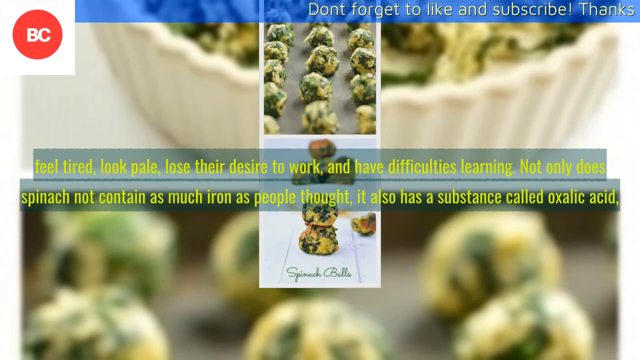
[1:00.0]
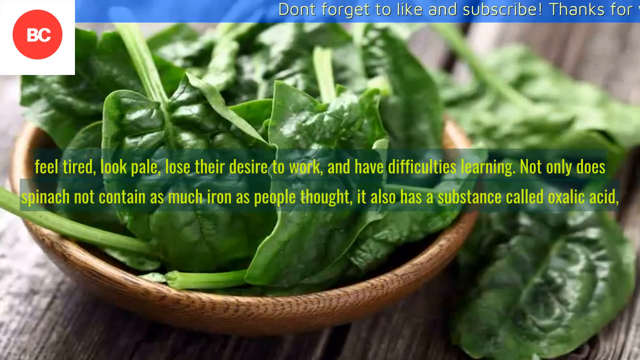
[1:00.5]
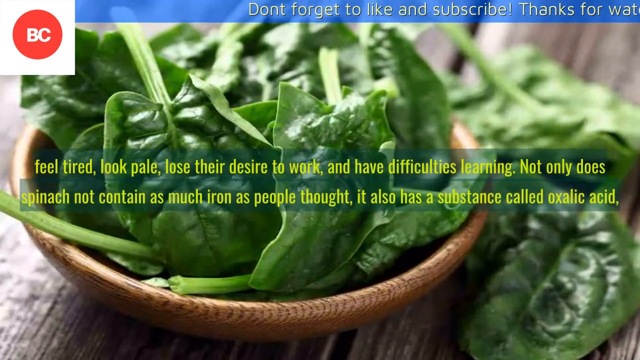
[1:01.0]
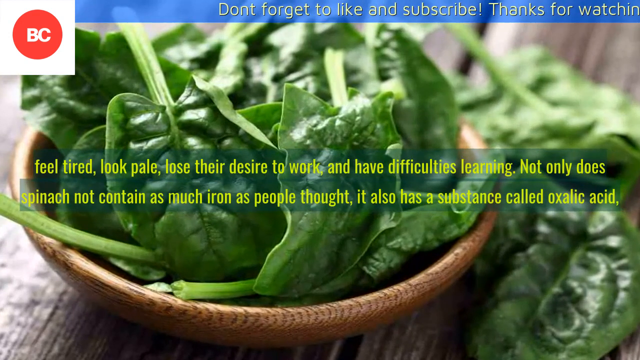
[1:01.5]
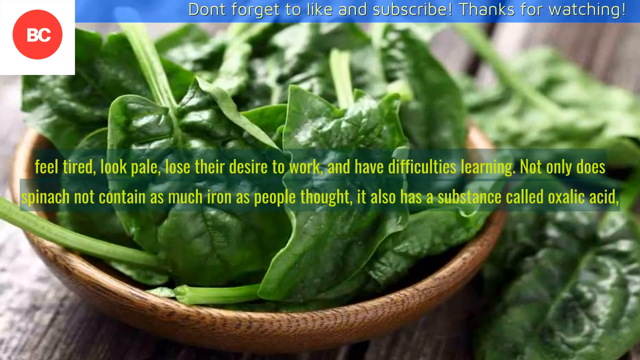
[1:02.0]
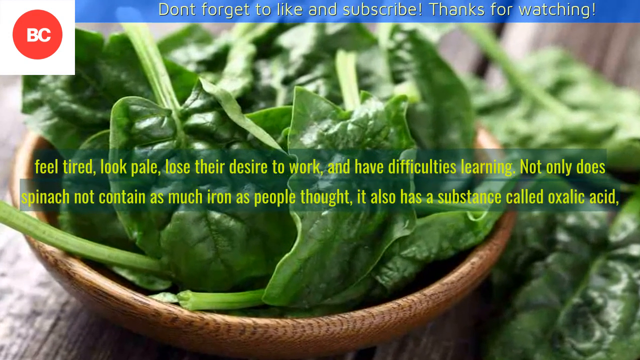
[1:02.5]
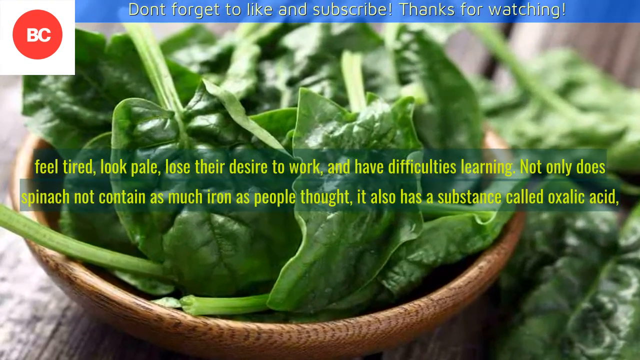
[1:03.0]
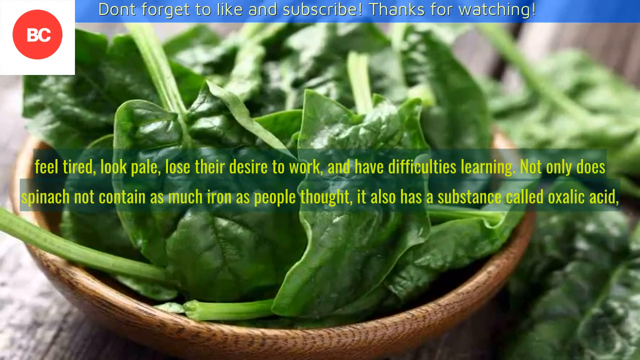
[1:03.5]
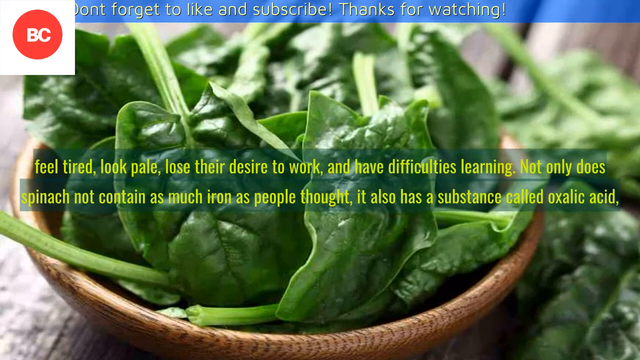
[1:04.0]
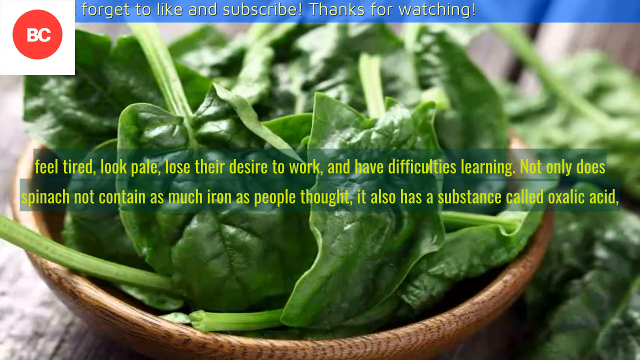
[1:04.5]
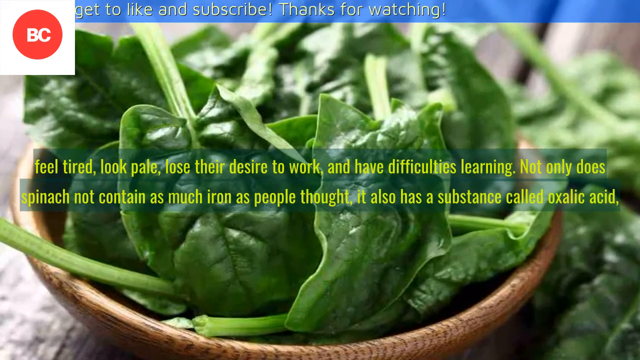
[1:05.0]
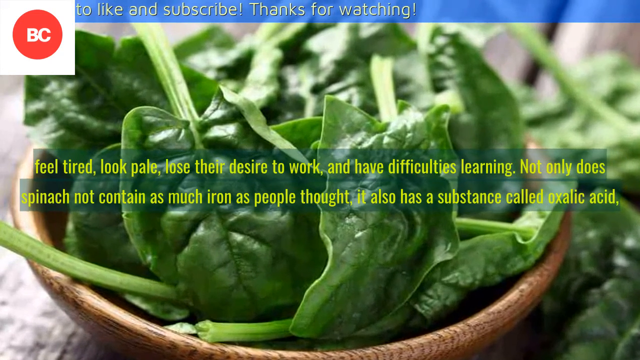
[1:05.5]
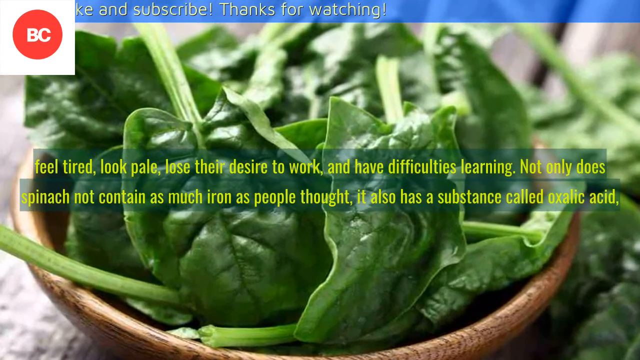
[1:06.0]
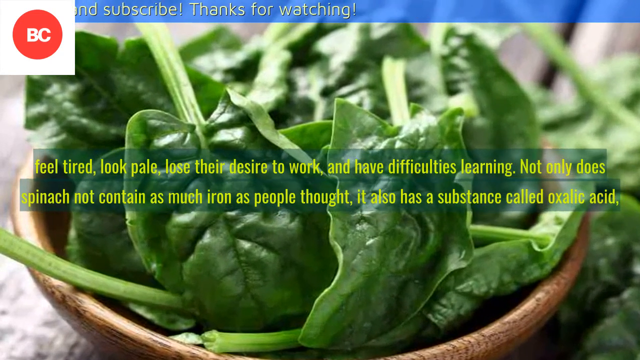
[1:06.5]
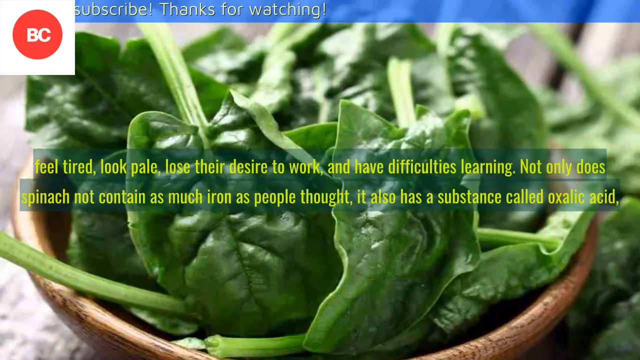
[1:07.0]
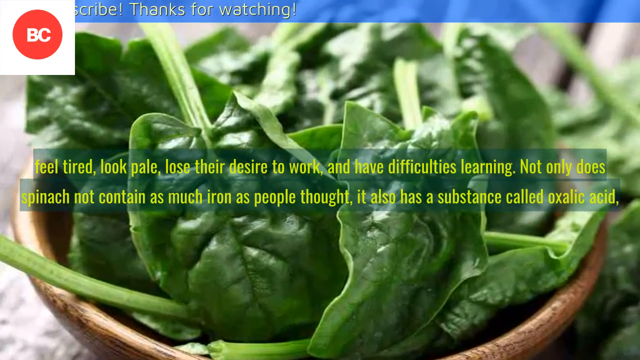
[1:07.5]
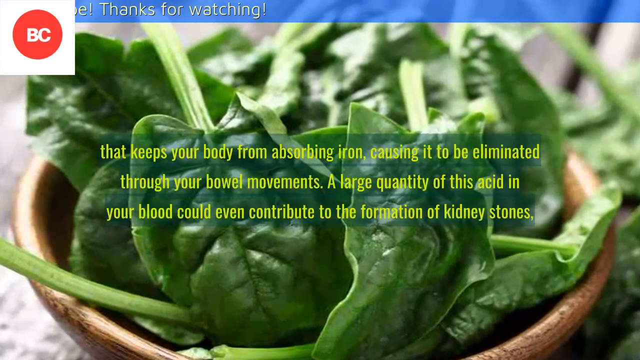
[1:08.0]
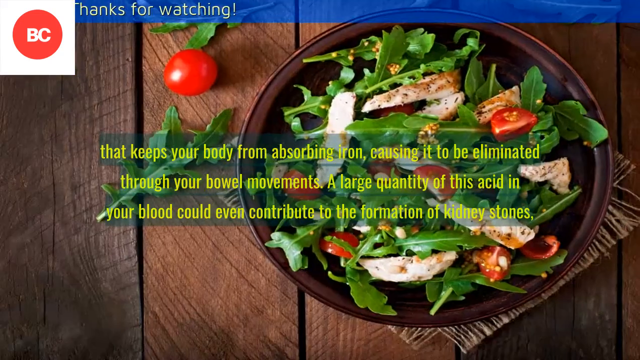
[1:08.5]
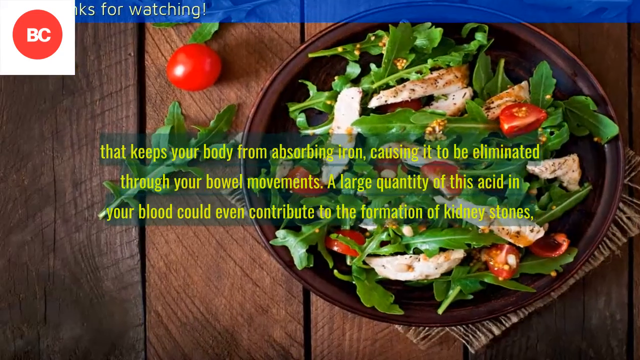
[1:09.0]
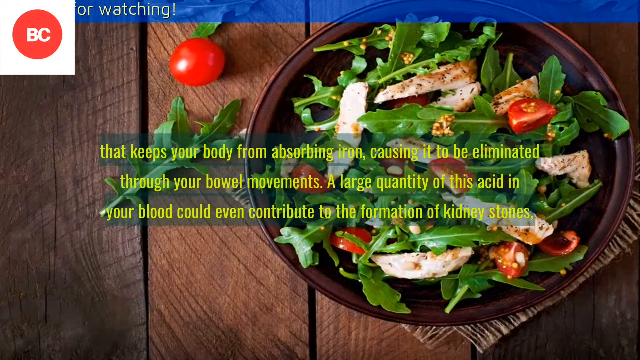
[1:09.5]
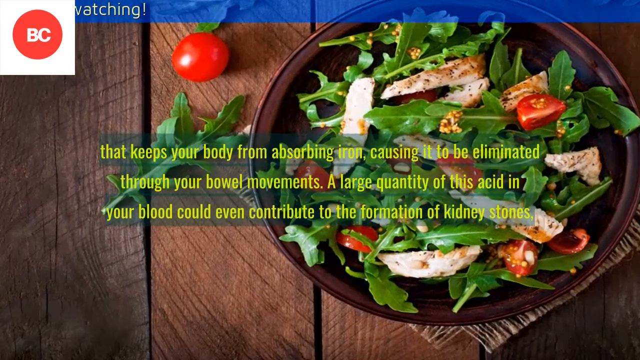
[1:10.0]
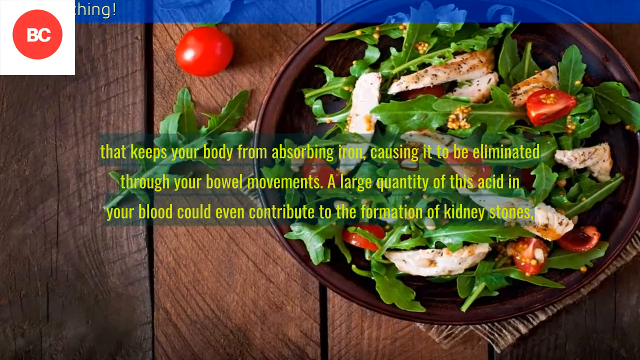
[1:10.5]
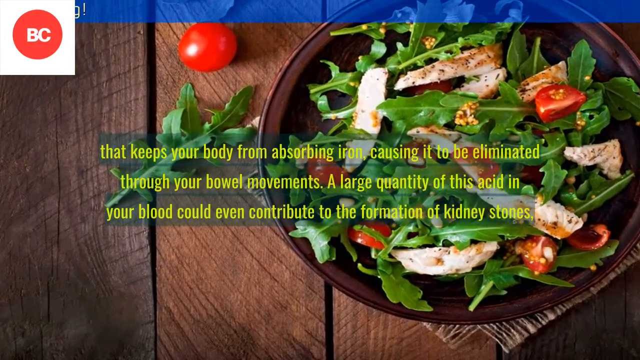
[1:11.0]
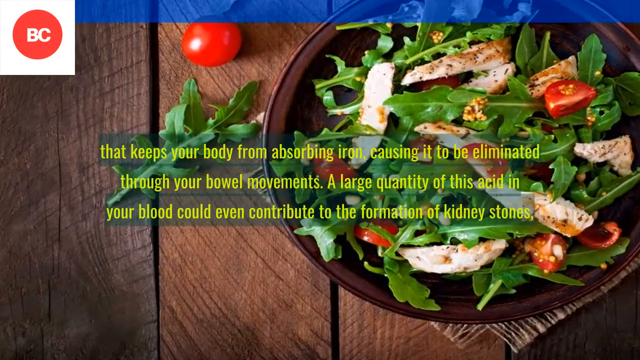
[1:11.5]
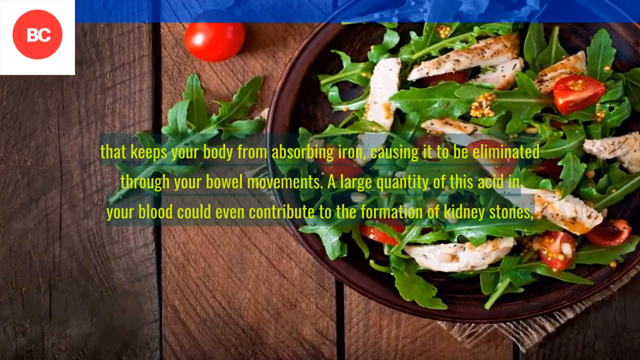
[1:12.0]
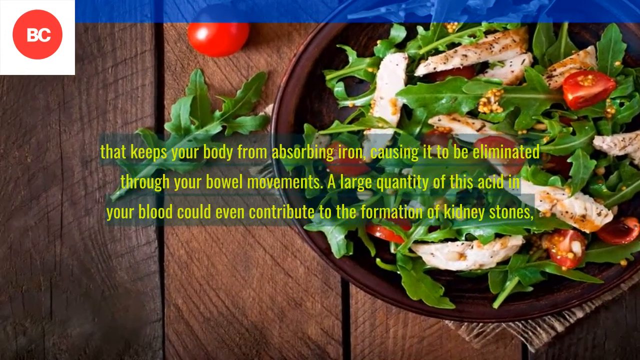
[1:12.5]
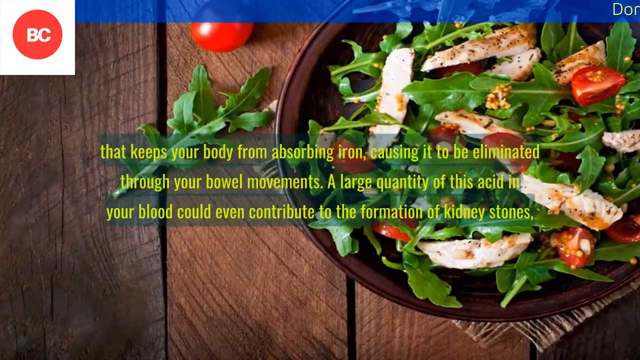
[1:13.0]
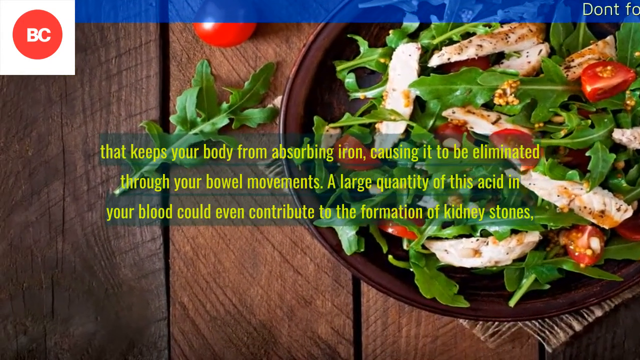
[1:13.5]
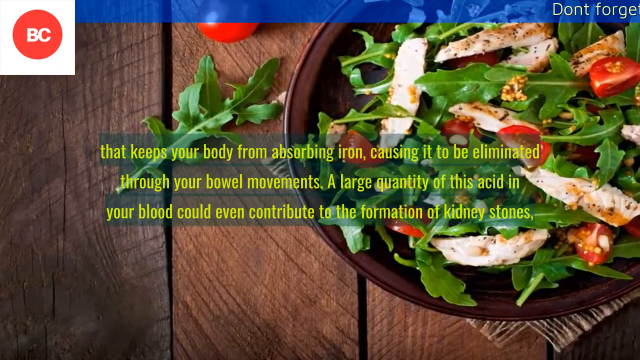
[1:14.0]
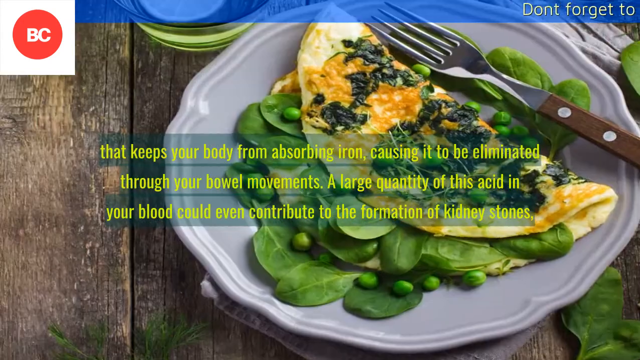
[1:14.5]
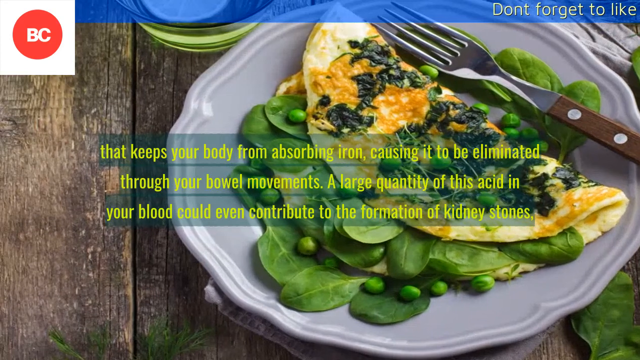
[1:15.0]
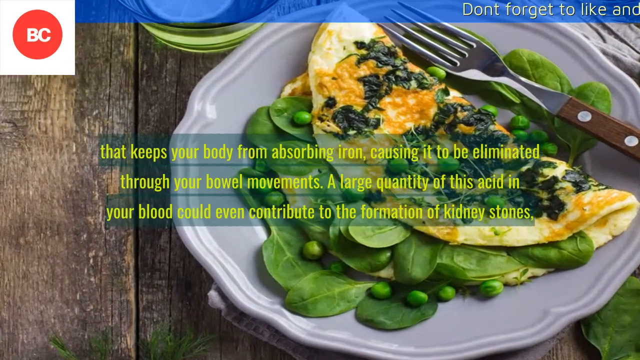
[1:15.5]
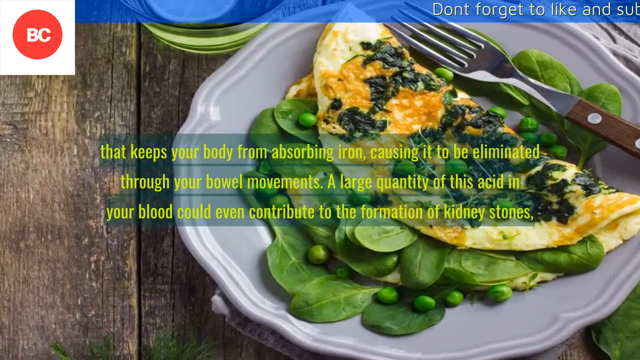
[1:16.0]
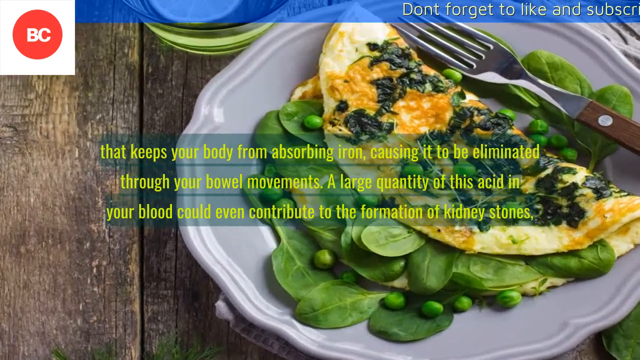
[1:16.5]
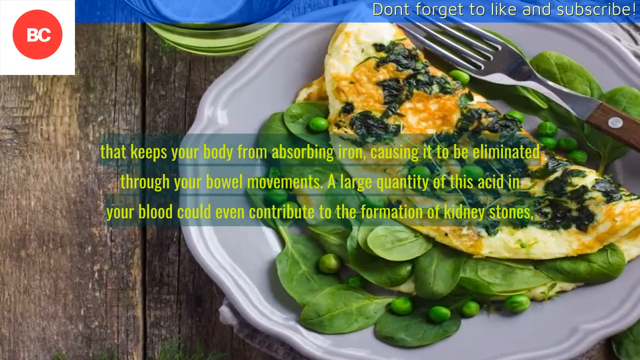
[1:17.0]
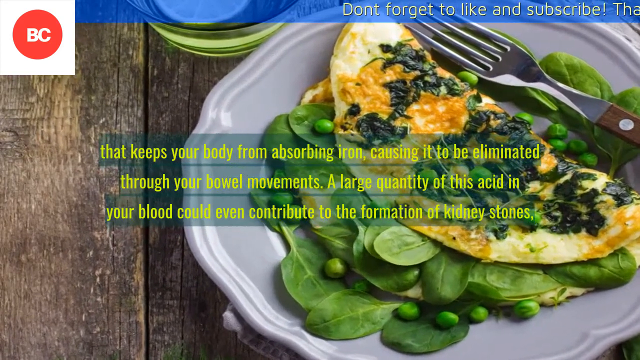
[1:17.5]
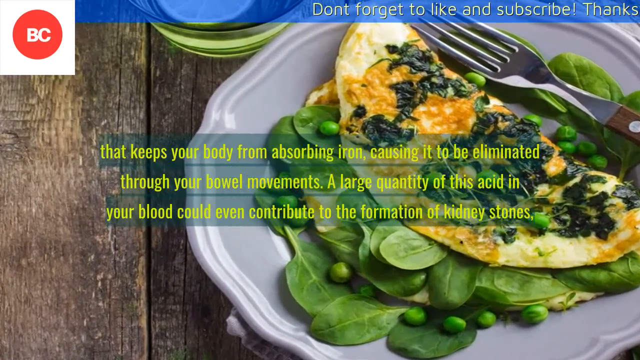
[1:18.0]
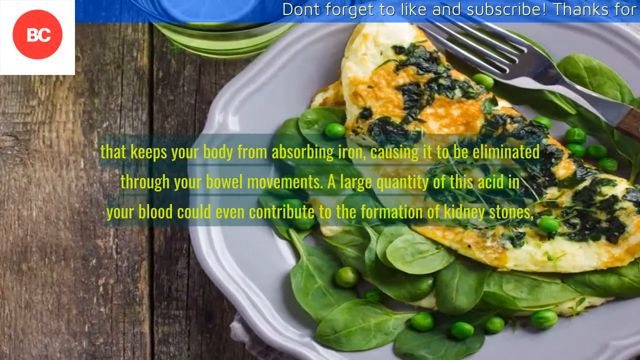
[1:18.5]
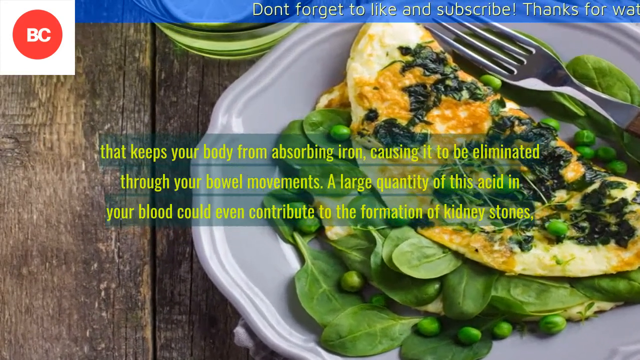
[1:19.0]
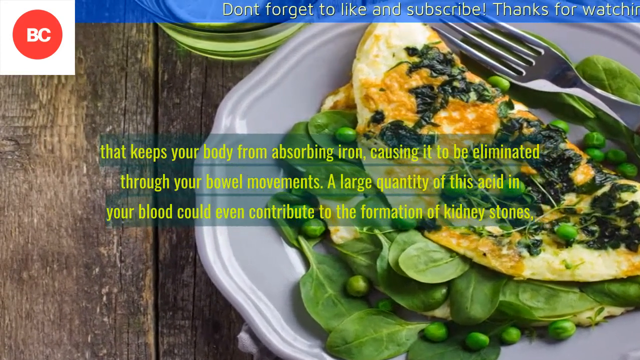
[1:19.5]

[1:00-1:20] The view reaches the bottom of the spinach dish image, and then the image switches to a video of a brown wooden bowl of spinach. More text on the screen explains why spinach may not help. The video zooms in on the top left of the spinach bowl. The image then changes to another spinach dish containing chicken and tomatoes, and the video zooms in on the bottom left. The images keep changing, showing a series of spinach dishes with different combinations, such as chicken, and then eggs with spinach. The text also keeps changing. The backdrop is made of wood, and there is always a spinach dish in the center being zoomed in on.